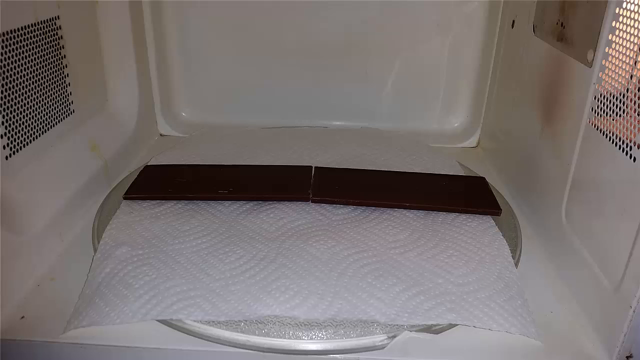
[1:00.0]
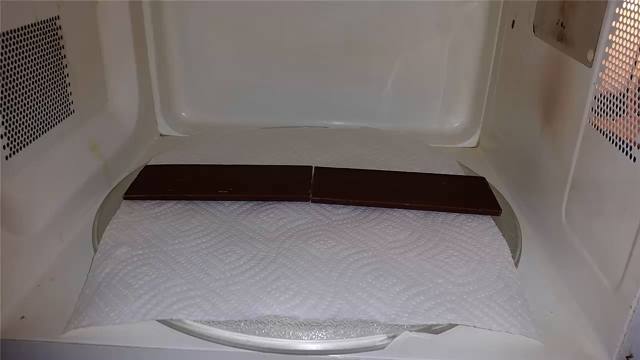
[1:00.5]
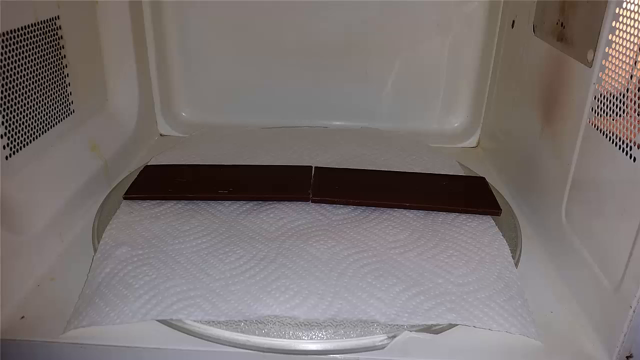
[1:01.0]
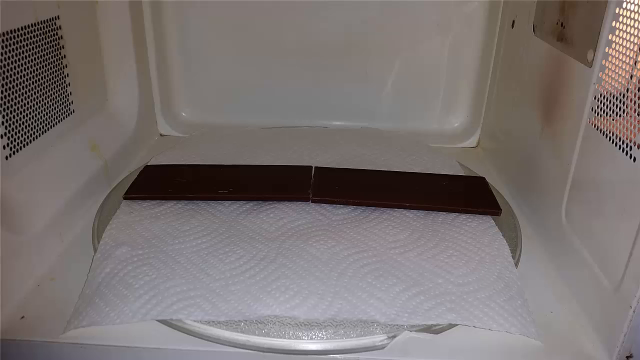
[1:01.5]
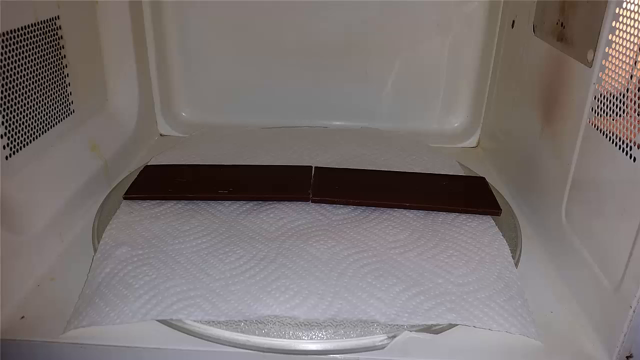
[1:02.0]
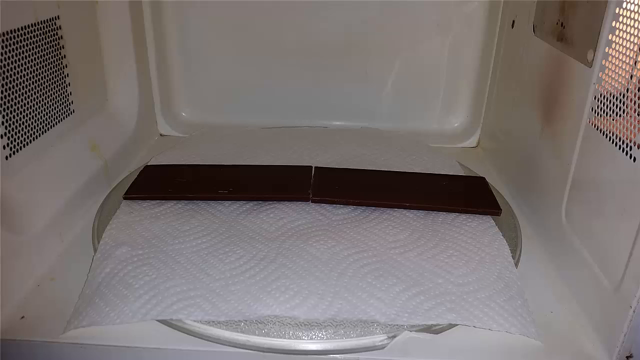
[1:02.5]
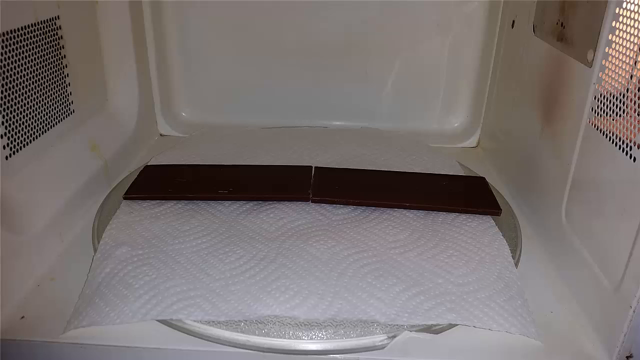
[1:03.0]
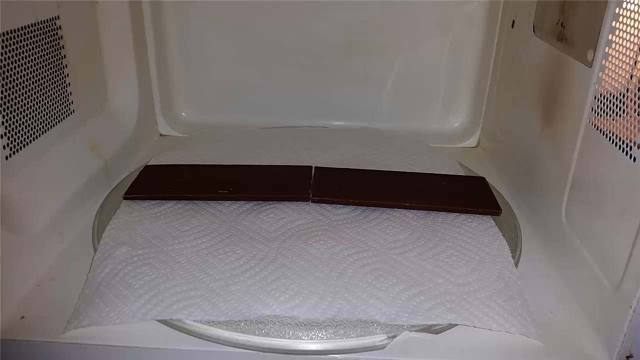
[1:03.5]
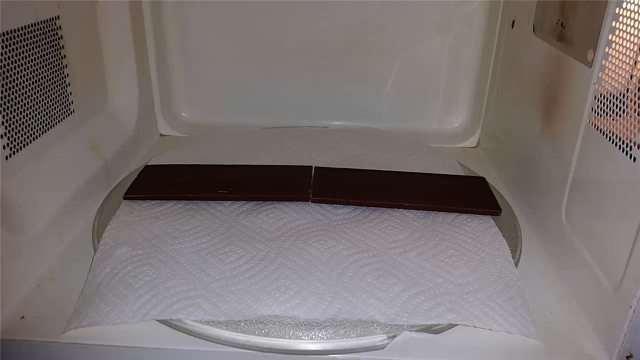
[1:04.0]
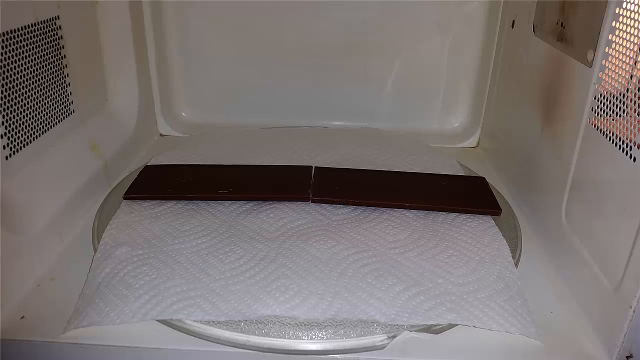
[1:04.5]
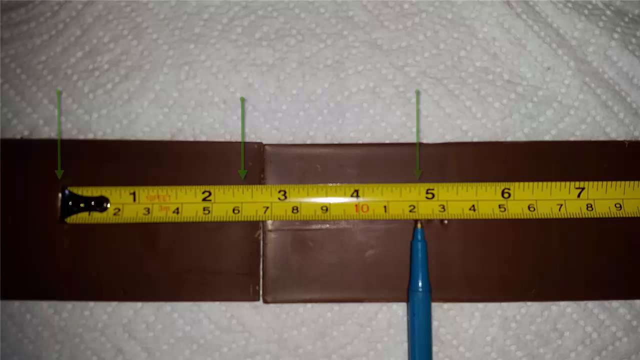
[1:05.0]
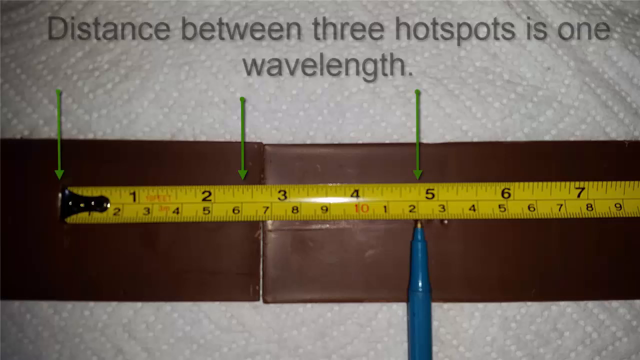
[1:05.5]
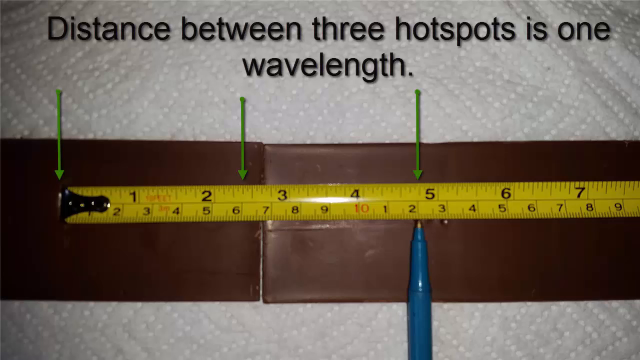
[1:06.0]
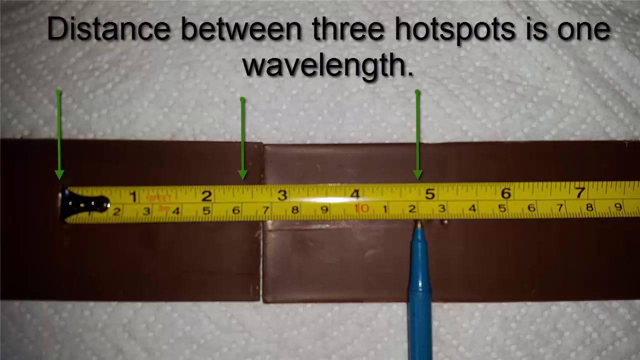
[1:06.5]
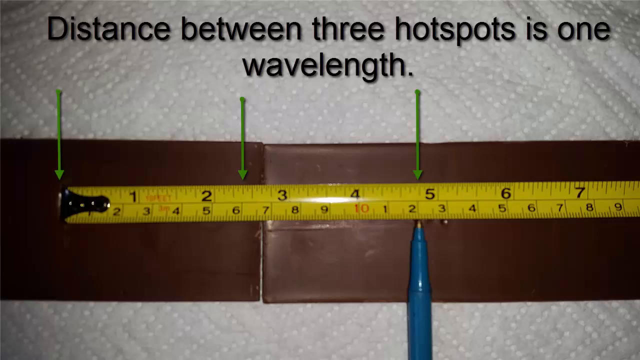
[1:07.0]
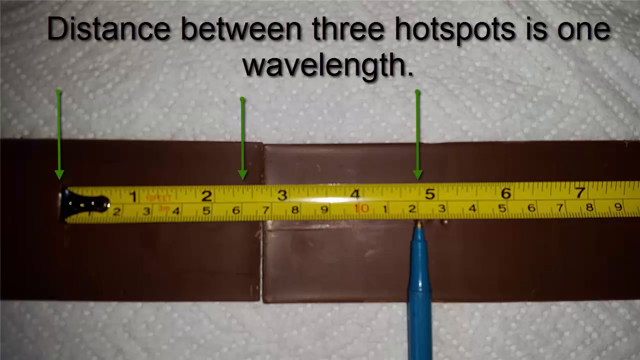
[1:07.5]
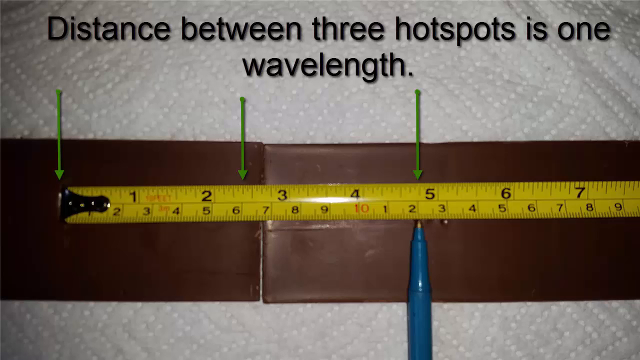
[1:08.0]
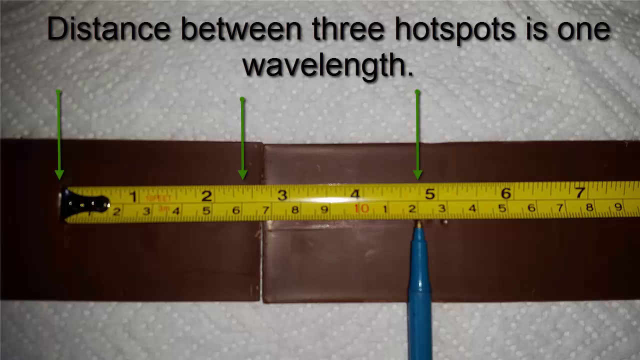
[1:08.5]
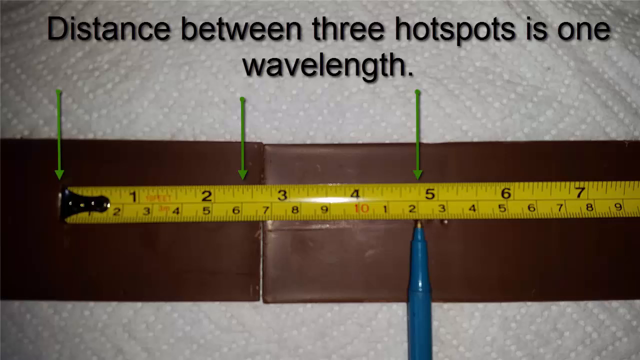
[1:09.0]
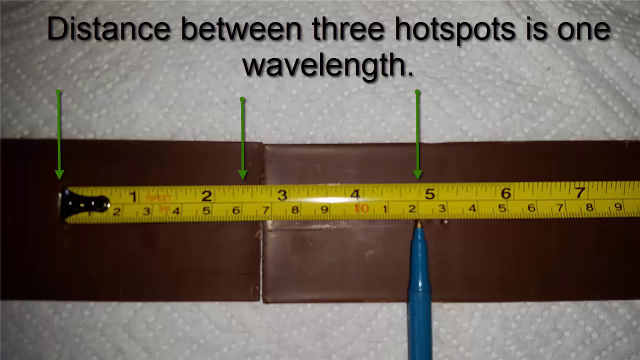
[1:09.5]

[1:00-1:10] A still image shows the inside of a microwave, with a paper towel laid down in place of the glass spinning plate. On top of it are two black, flat-ish rectangular shapes that cannot be identified. Then a still image shows what was in the microwave: two dark brown rectangles, with a measuring tape laid across the top showing how long they are, with seven or almost eight inches showing. Text says "distance between three hotspots is one wavelength," and green arrows point to the hotspots: one at the beginning of the measuring tape, one at 2 1/2 inches, and one at 4 3/4 inches. A blue ink pen points to spots on the hot parts.